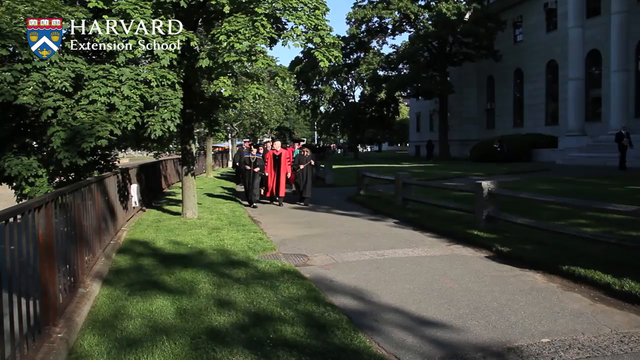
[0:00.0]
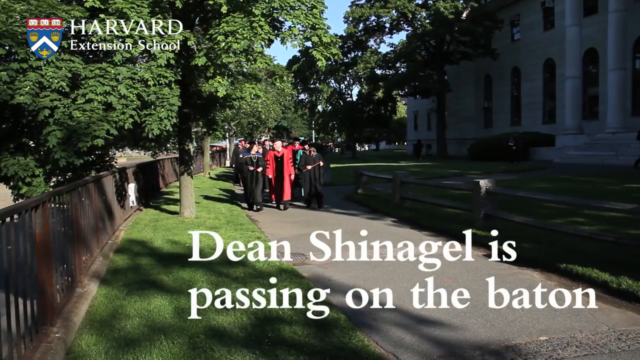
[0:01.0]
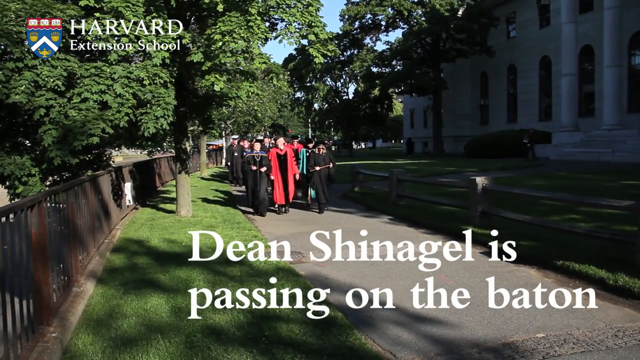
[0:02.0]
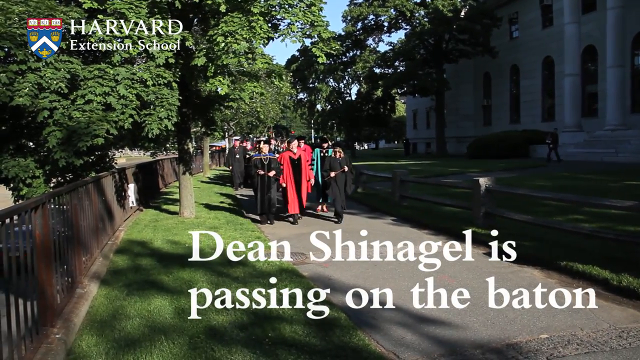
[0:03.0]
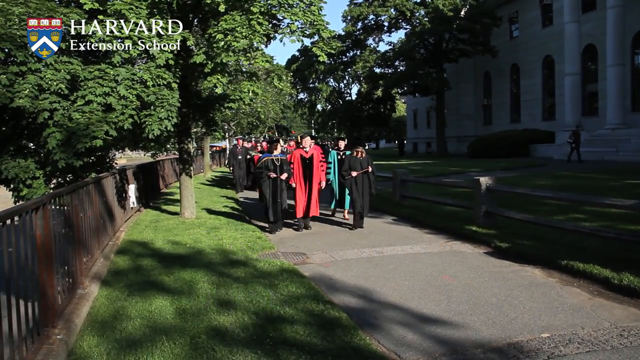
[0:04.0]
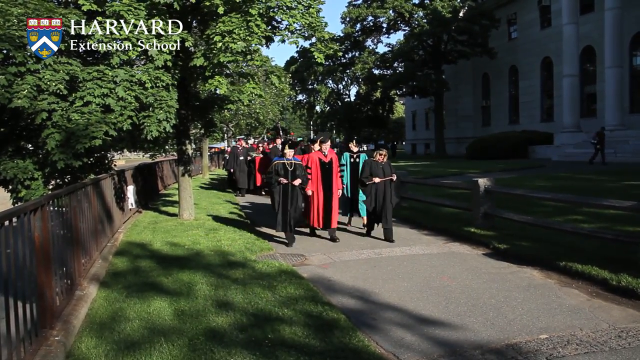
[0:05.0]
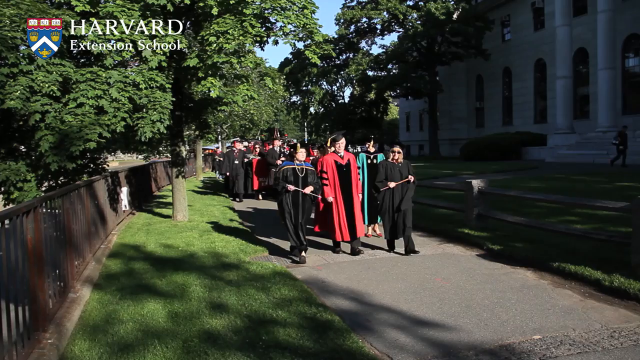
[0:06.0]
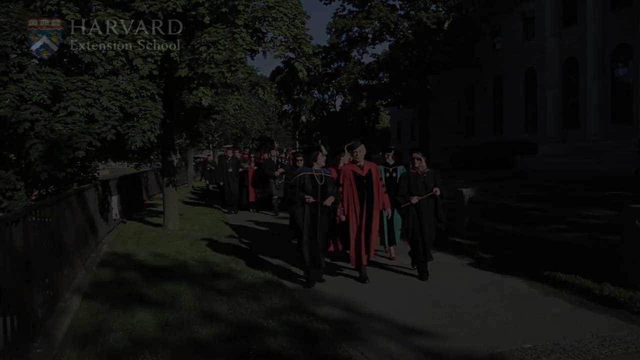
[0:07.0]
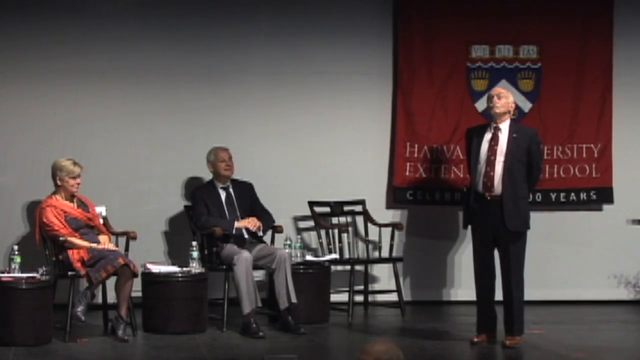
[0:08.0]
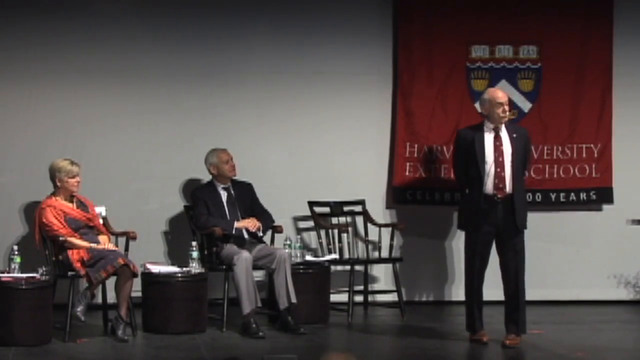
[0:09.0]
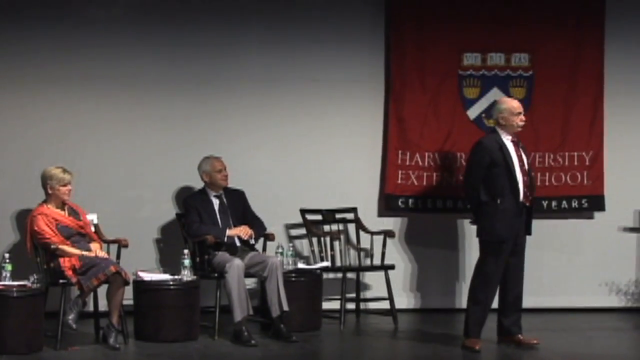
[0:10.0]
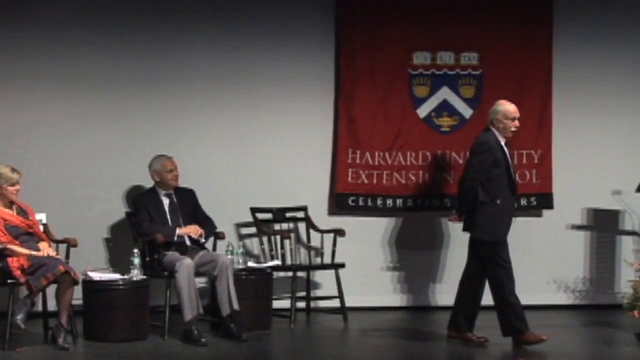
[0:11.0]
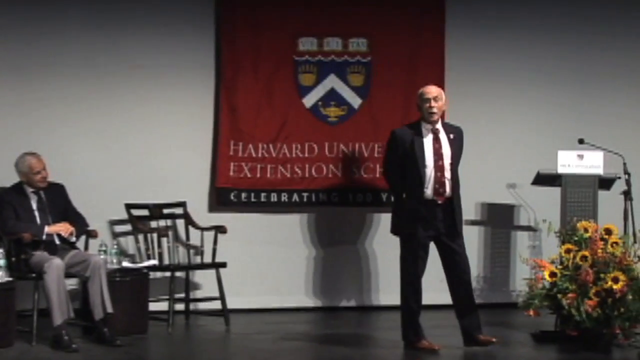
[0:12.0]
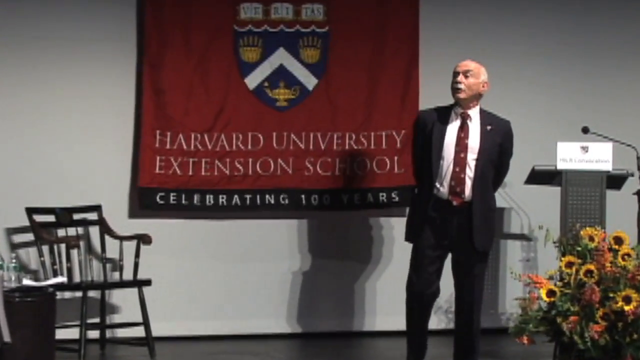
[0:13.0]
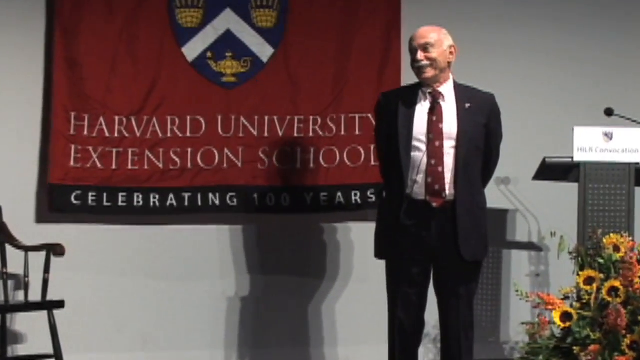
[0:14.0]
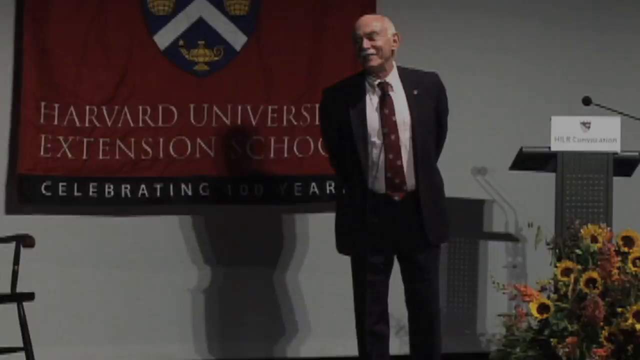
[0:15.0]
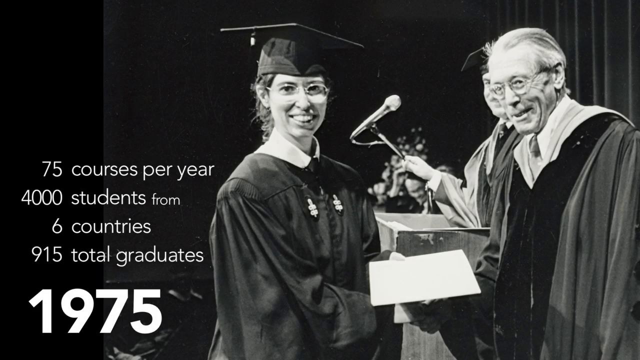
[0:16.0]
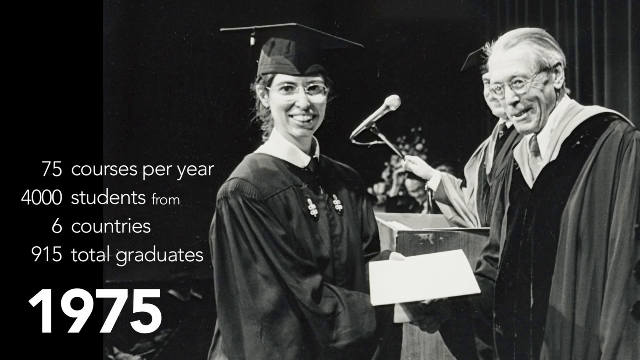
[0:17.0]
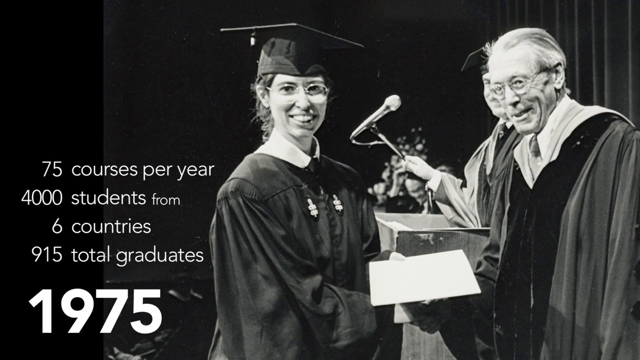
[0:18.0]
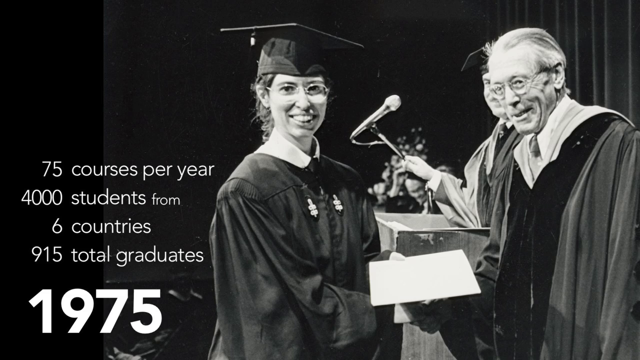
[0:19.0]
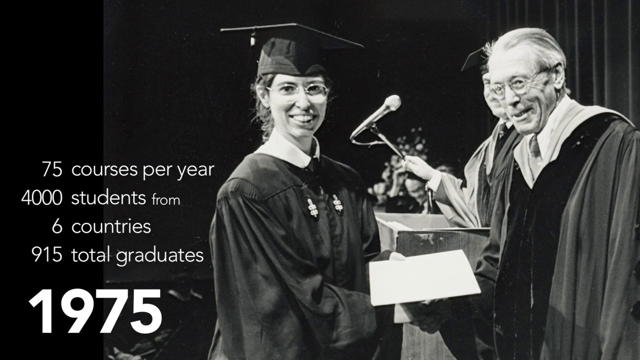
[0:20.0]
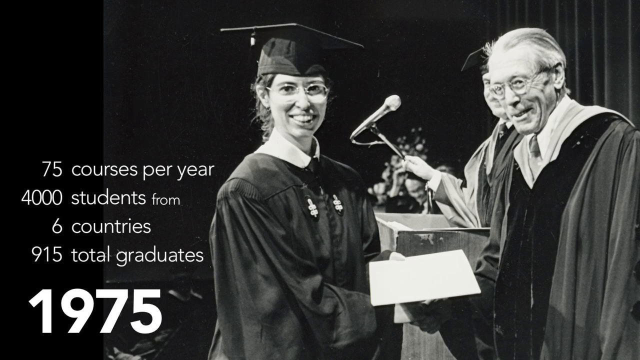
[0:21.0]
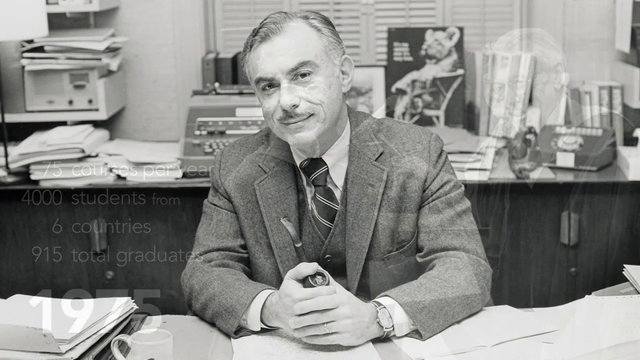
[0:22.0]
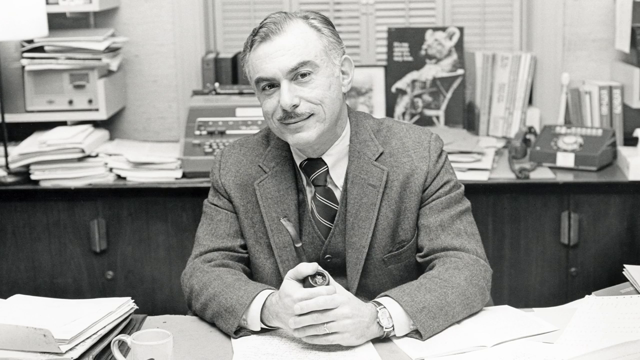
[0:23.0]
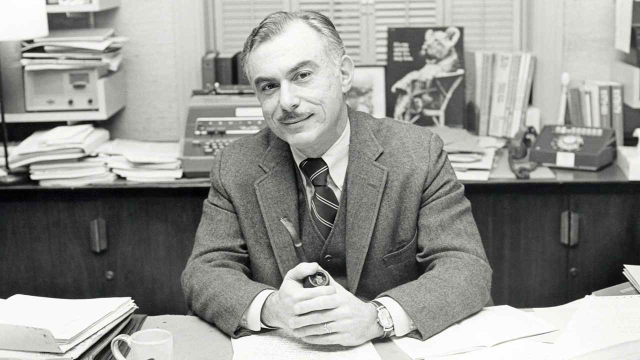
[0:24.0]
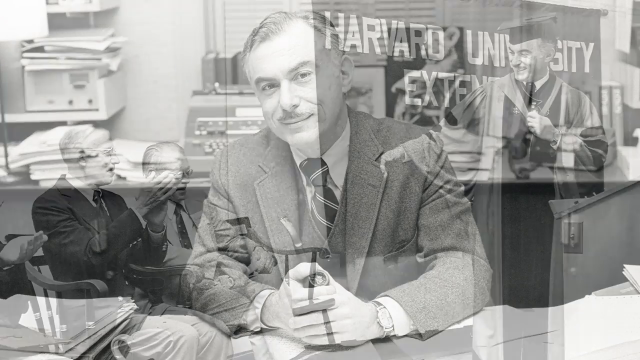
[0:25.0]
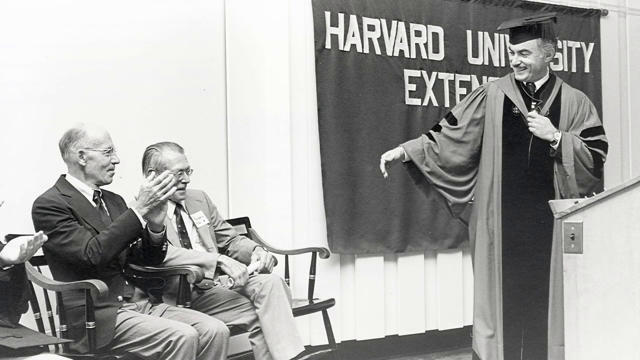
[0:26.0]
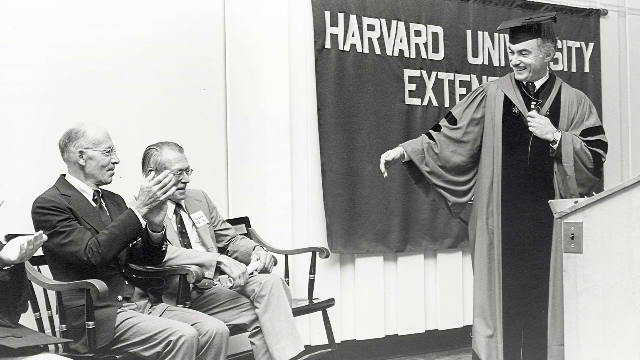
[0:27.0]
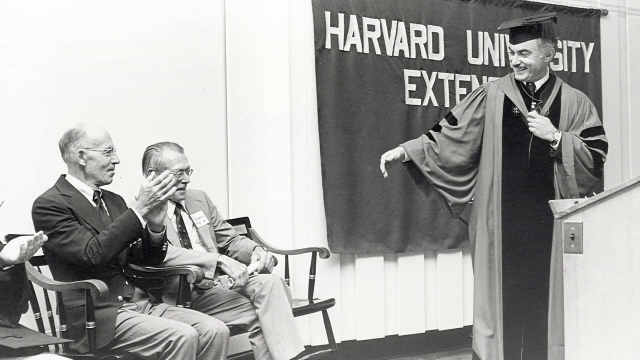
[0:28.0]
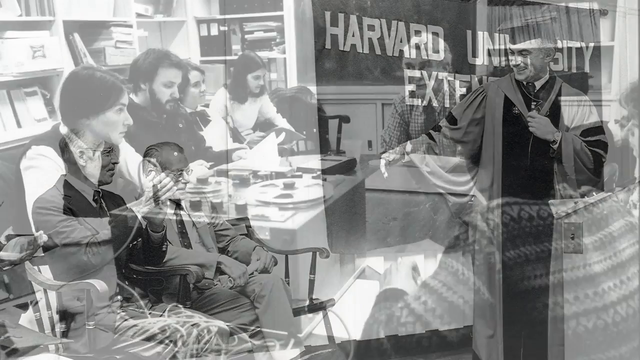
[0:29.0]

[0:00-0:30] The video opens on Harvard Extension School. Students who look like they are graduating walk along a path; most wear black graduation gowns and one wears a red graduation gown. Off to the side, where there is a hedge, a gentleman is walking. The side of a big house is visible, with about seven windows, though not the whole house is shown, and a staircase can be seen through to the house. It looks like the dean is walking with a student. Text reads "Harvard University Extension School celebrating 100 years." A man is on stage, with something that looks like a stand with a microphone. He wears a black suit, a white shirt and a red tie, and walks around the stage making jokes. Figures follow: "75 courses per year" and "4,000 students from six countries." Men are also seen standing and talking.